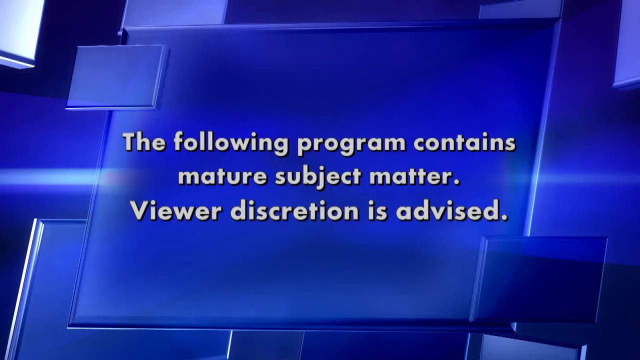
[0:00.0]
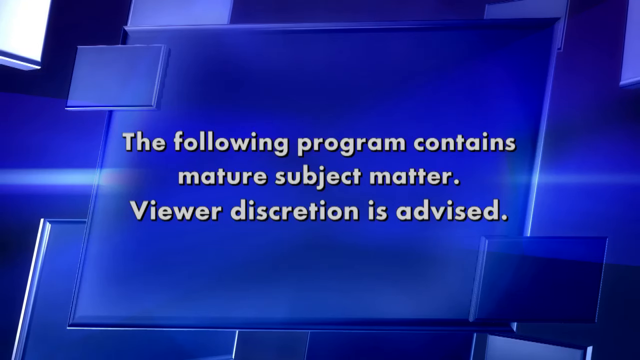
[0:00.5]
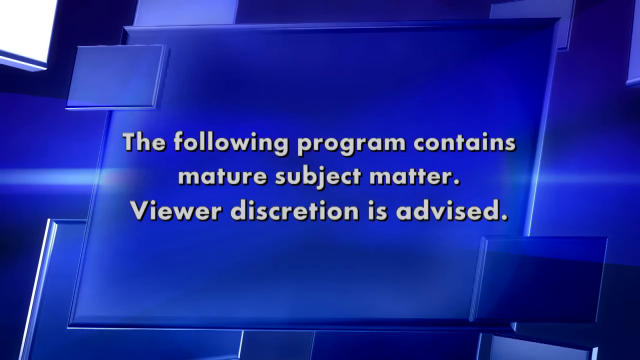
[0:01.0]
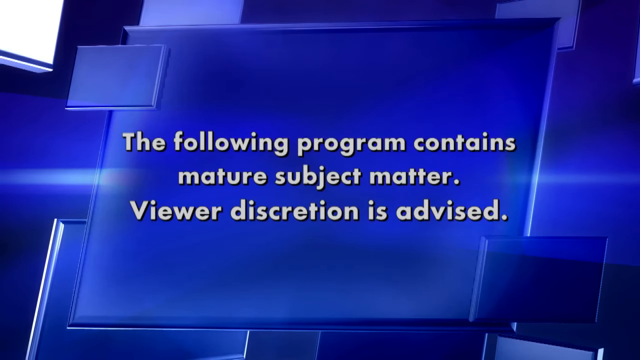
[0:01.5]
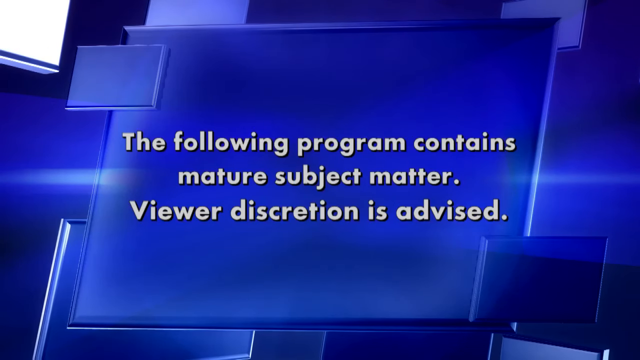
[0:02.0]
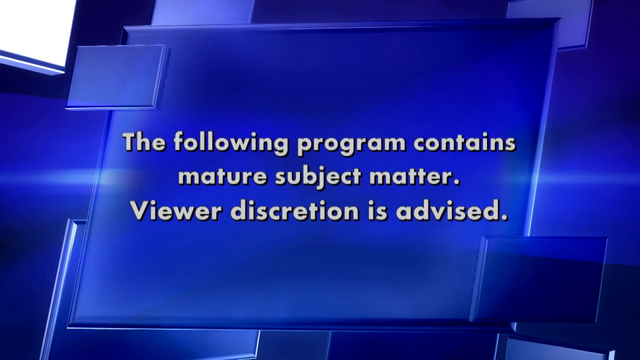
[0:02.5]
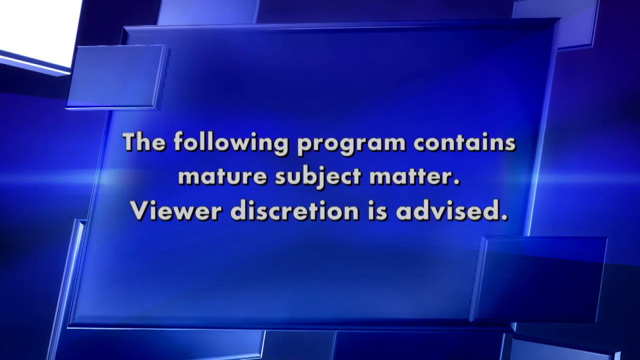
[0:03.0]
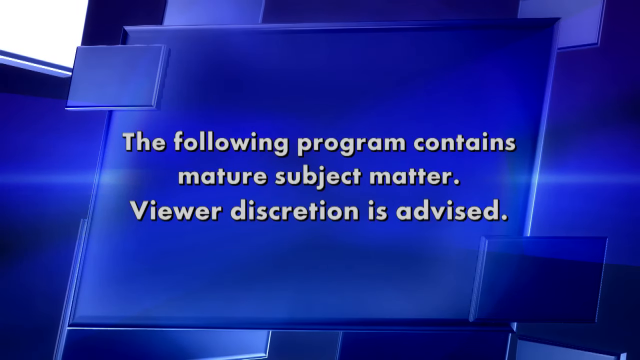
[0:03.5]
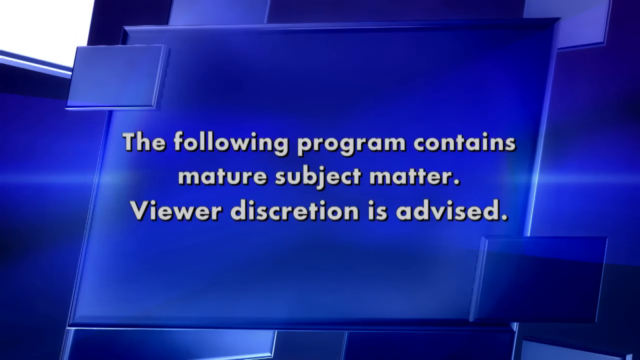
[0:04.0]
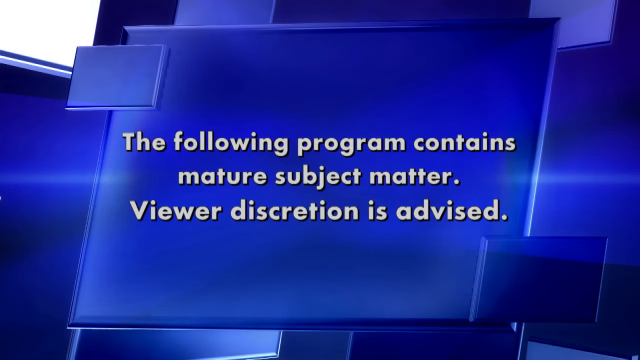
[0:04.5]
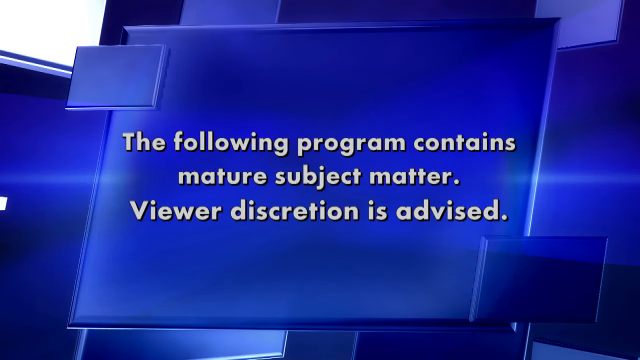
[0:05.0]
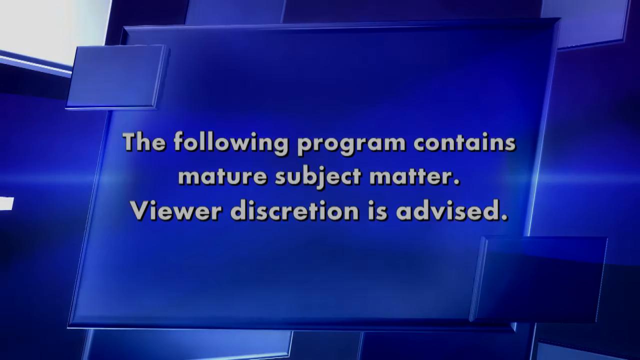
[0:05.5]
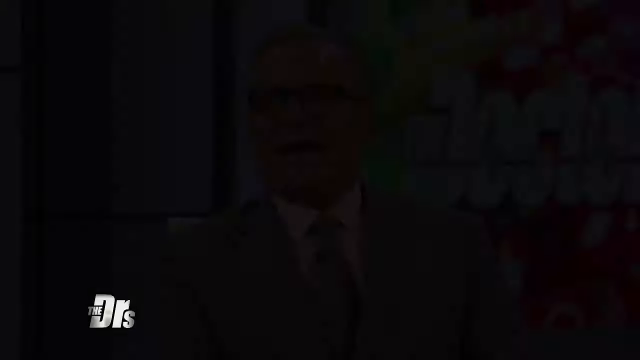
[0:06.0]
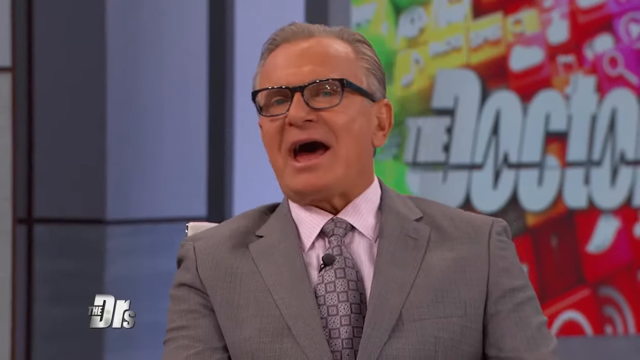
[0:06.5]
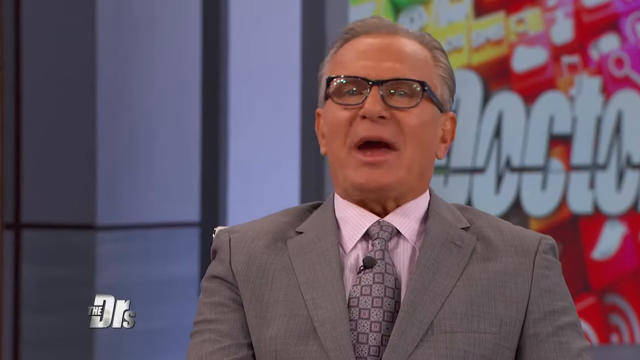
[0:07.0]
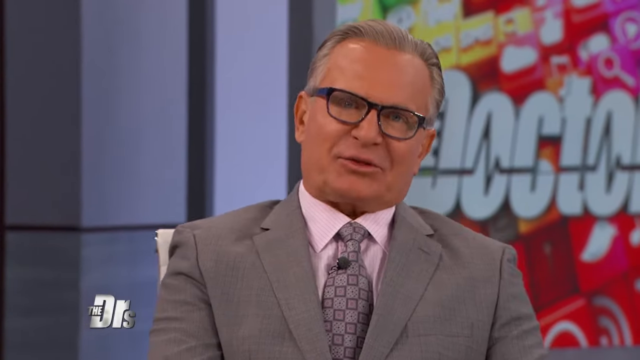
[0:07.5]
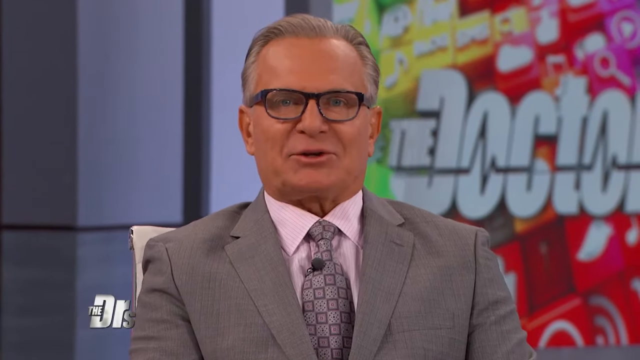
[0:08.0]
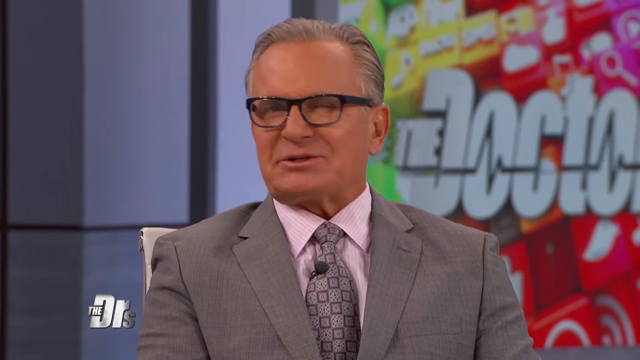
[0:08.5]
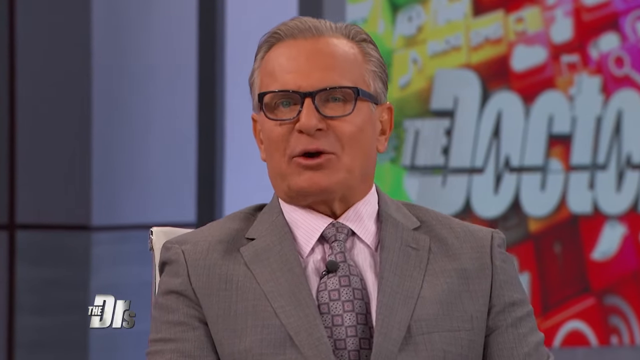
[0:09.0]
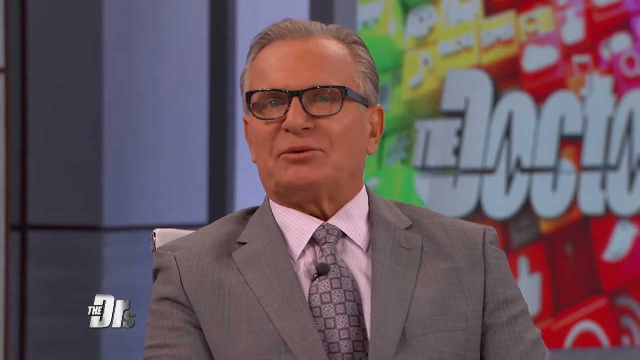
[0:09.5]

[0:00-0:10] The video opens with a viewer discretion advisory in white text reading "The following program contains mature subject matter. Viewer discretion is advised." On a blue background, multiple rectangular design boxes of different sizes are animated and moving. The scene then cuts to a shot of a gray-haired man wearing glasses, sitting in a chair that appears to be white behind him. He wears a gray suit, a pink shirt, and a patterned gray and dark gray tie with a mic attached to it. Behind him is a poster that says "doctor" with pulse signs running through the word, multicolored in red, orange and white. He is speaking.